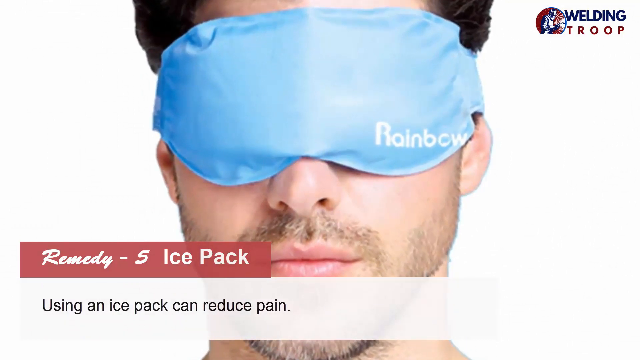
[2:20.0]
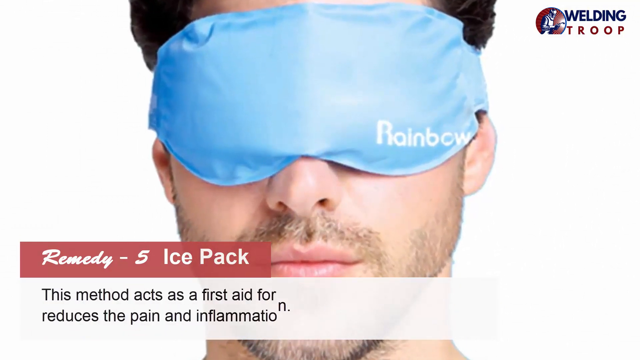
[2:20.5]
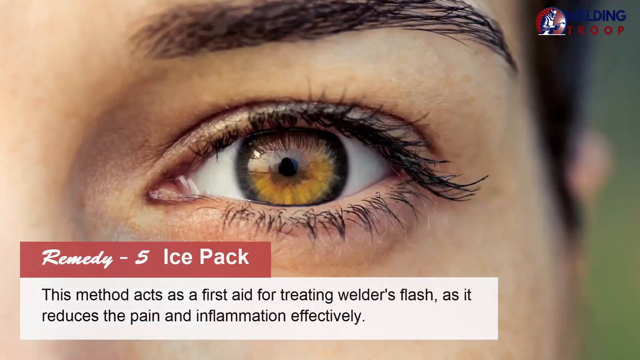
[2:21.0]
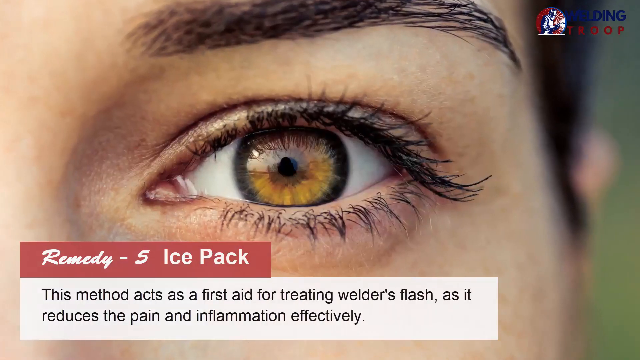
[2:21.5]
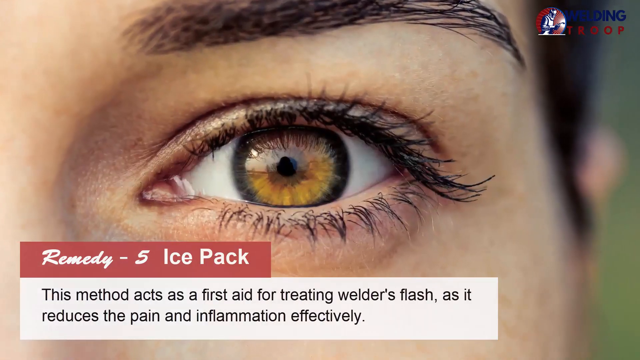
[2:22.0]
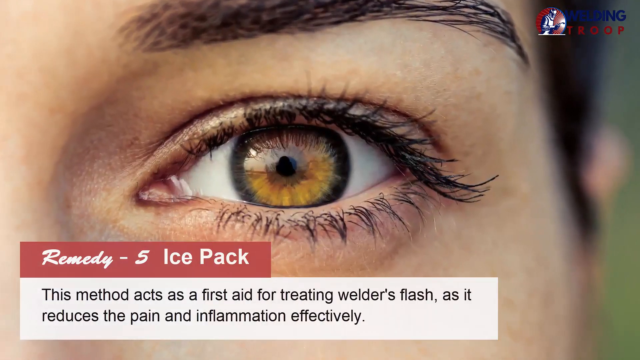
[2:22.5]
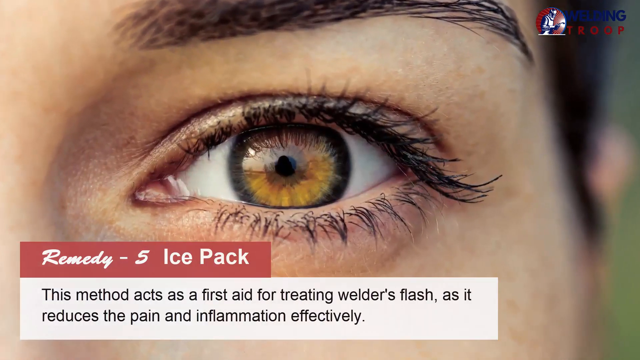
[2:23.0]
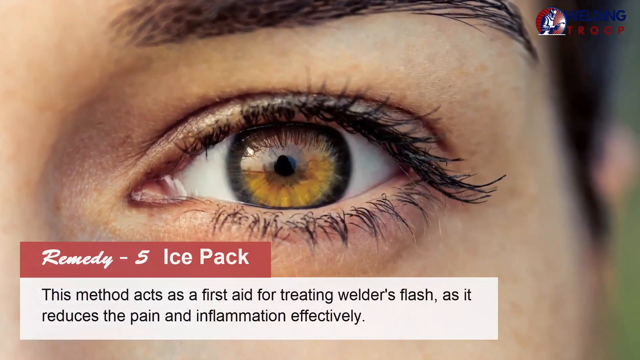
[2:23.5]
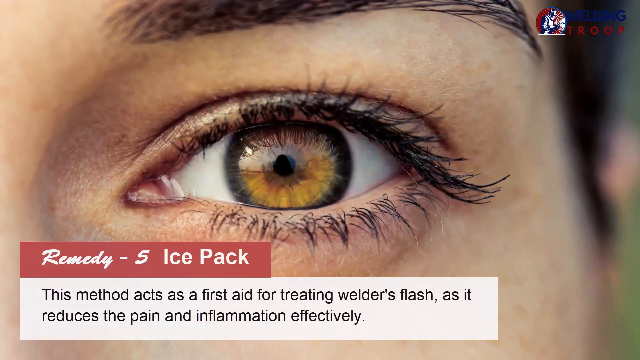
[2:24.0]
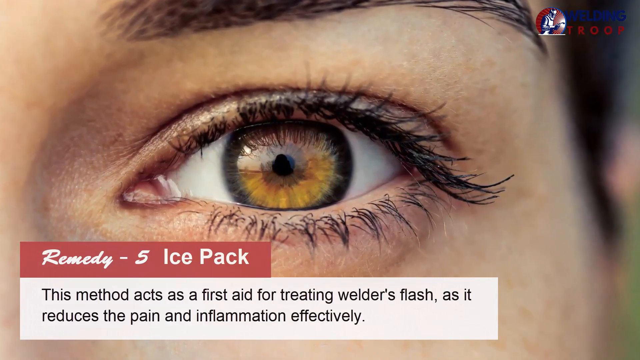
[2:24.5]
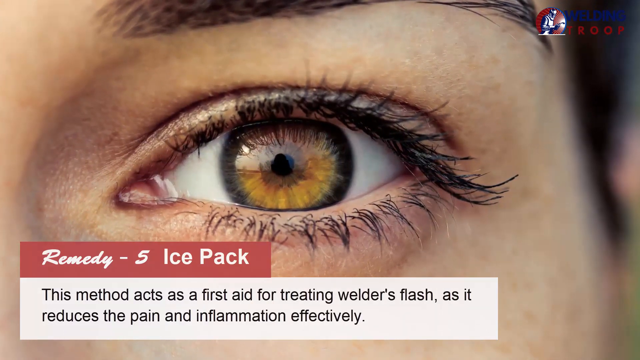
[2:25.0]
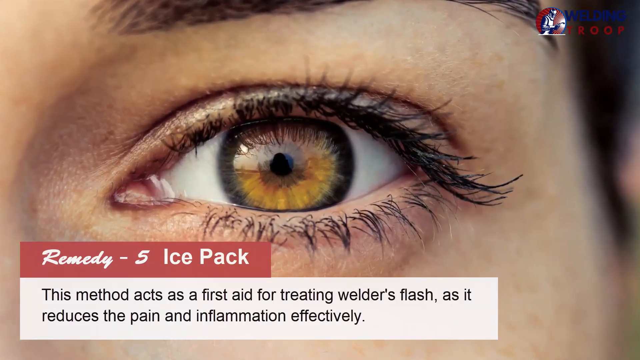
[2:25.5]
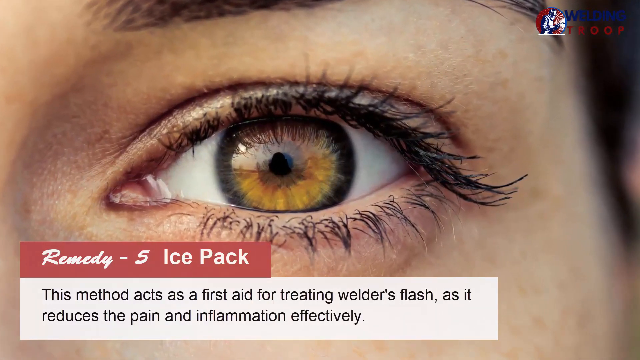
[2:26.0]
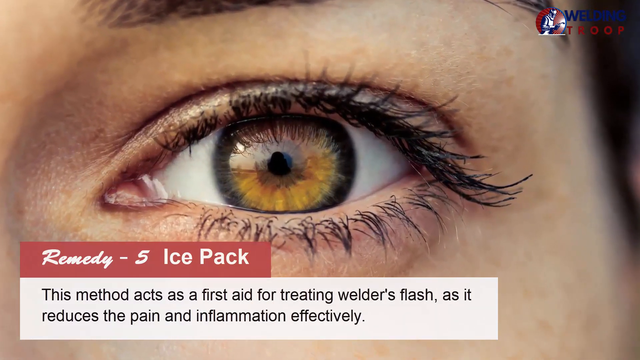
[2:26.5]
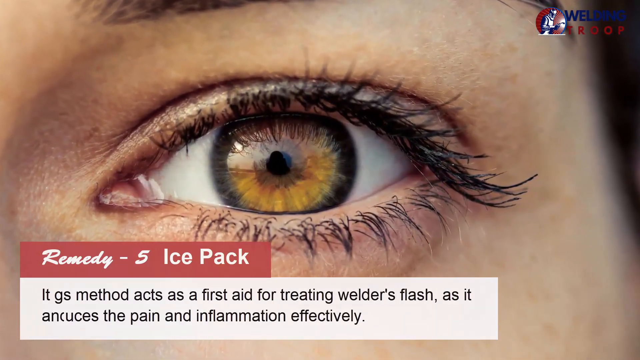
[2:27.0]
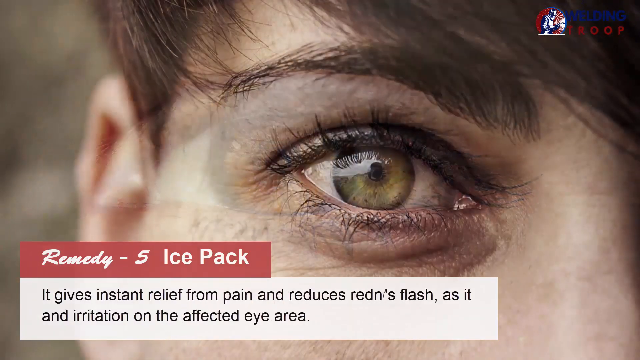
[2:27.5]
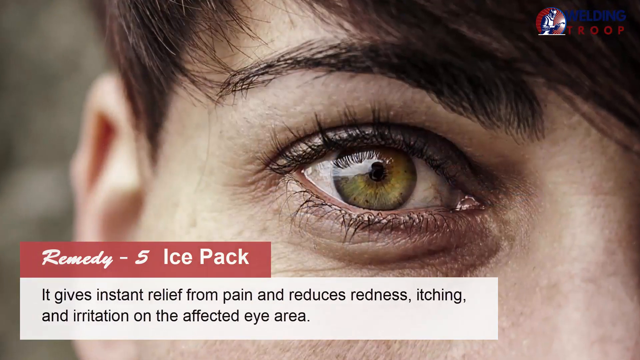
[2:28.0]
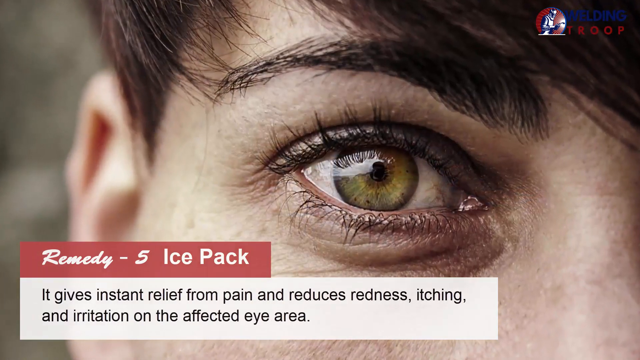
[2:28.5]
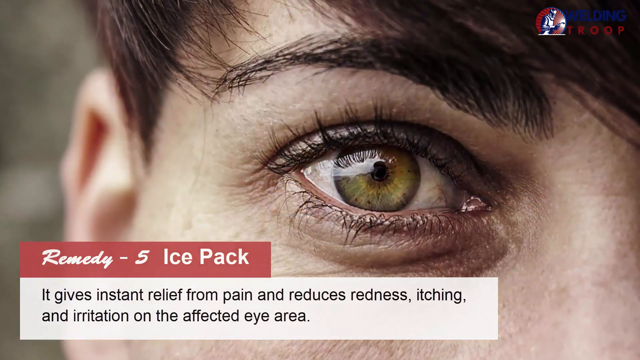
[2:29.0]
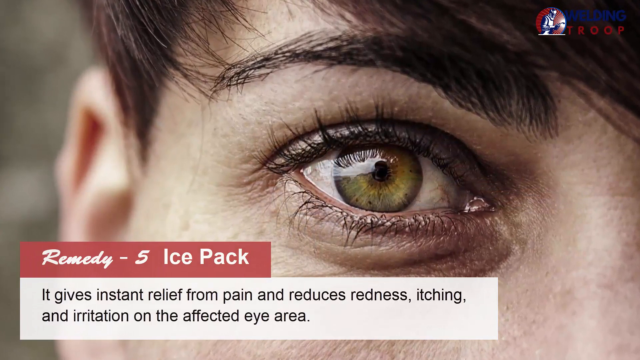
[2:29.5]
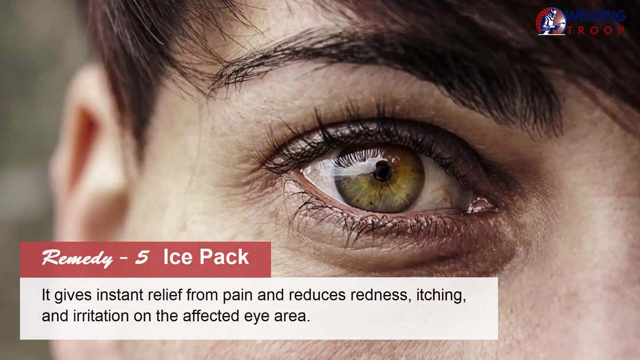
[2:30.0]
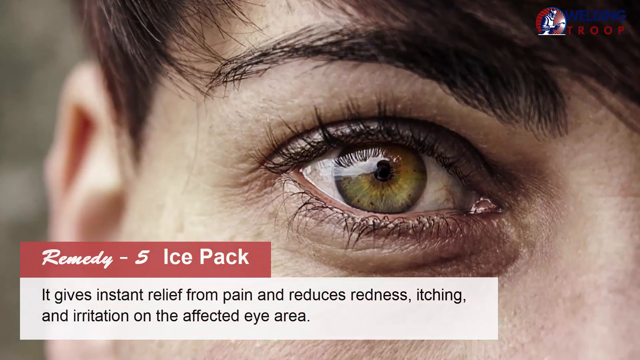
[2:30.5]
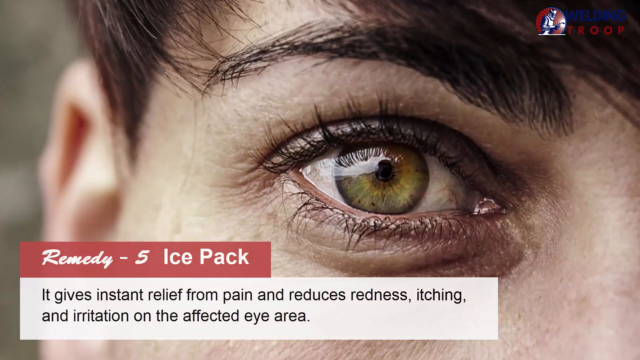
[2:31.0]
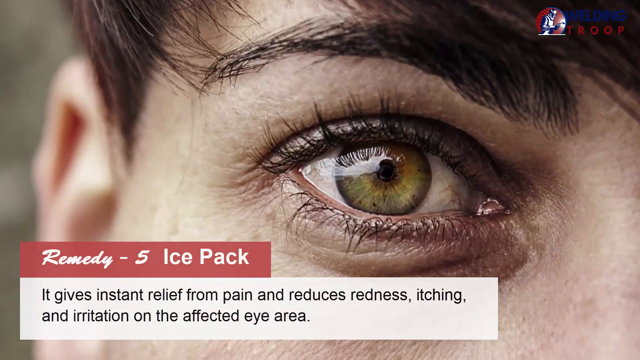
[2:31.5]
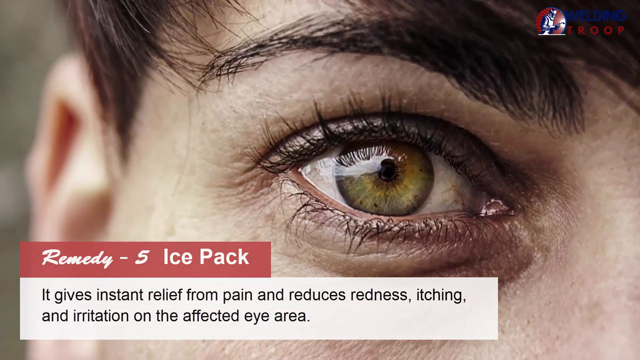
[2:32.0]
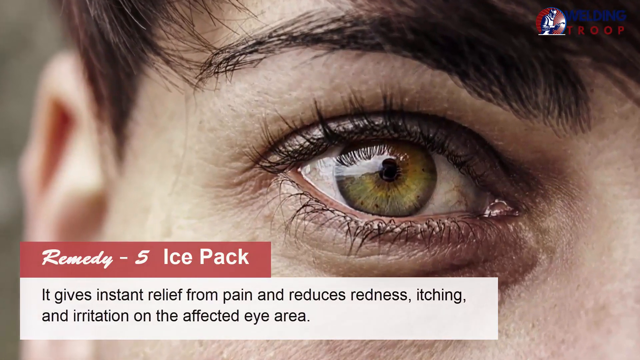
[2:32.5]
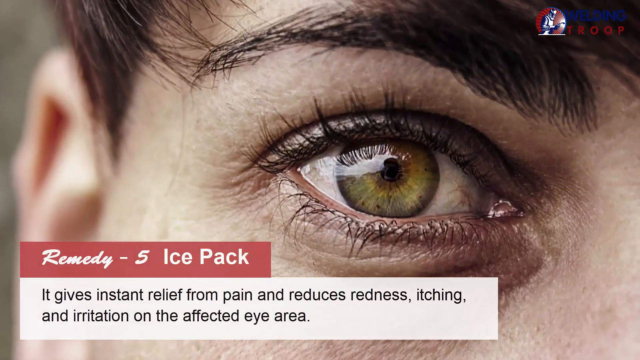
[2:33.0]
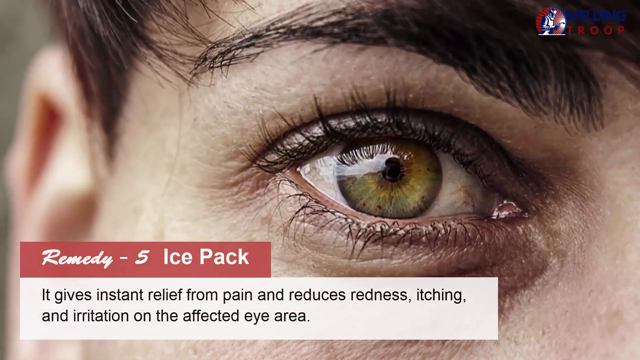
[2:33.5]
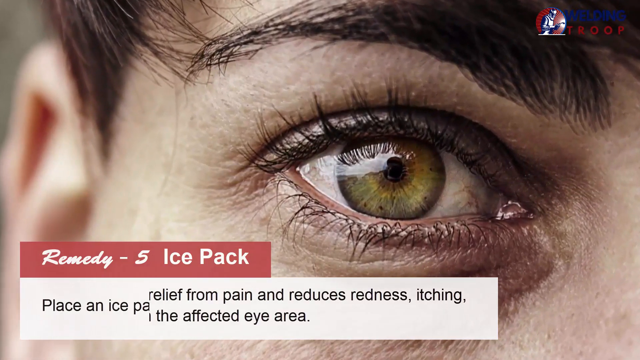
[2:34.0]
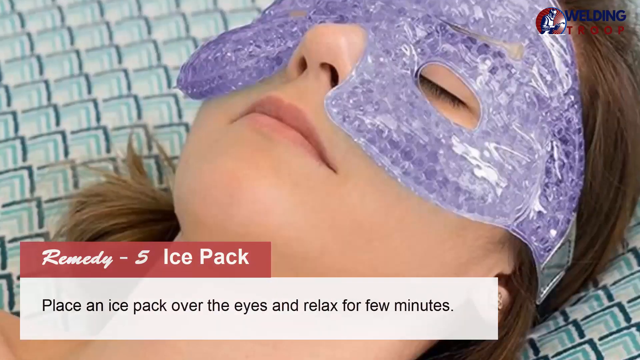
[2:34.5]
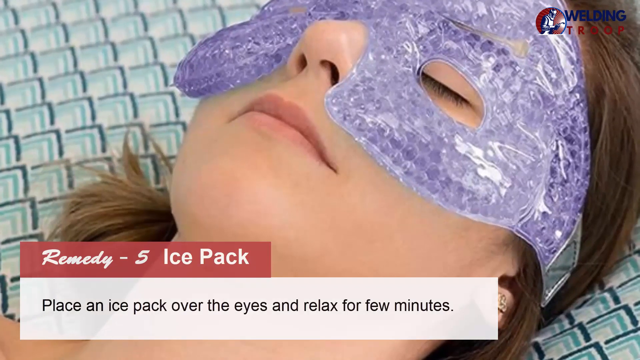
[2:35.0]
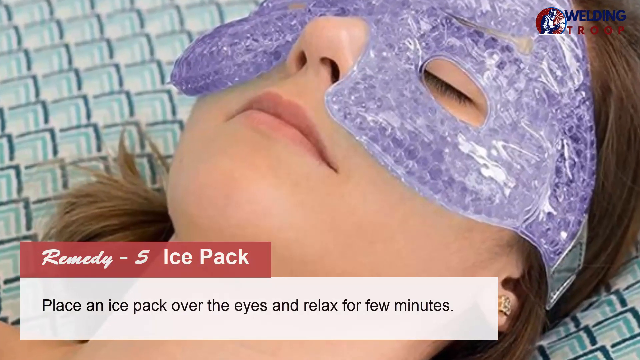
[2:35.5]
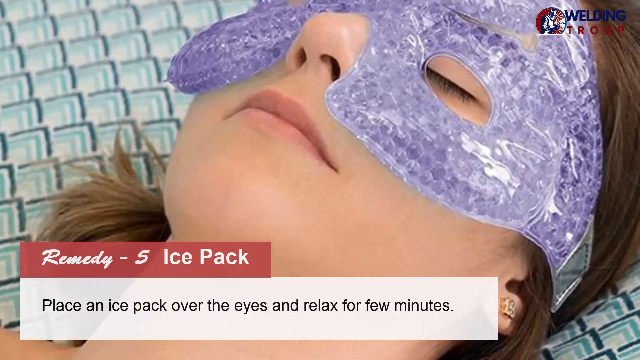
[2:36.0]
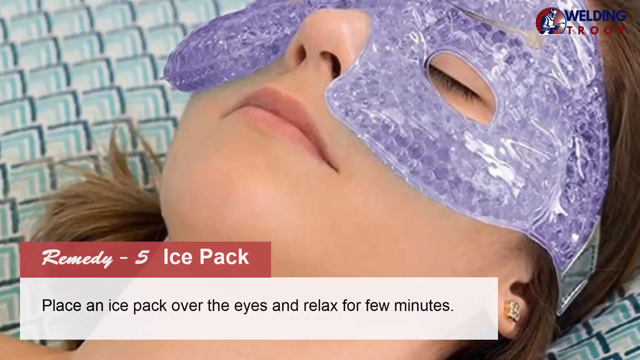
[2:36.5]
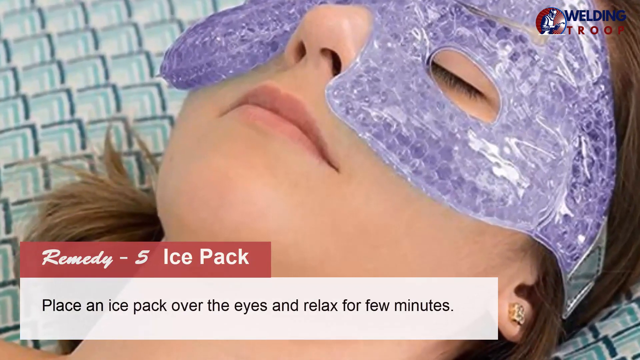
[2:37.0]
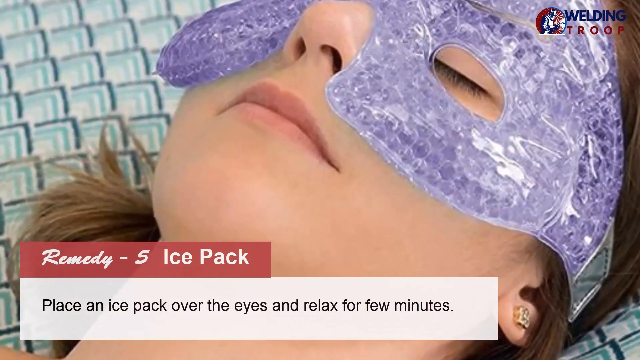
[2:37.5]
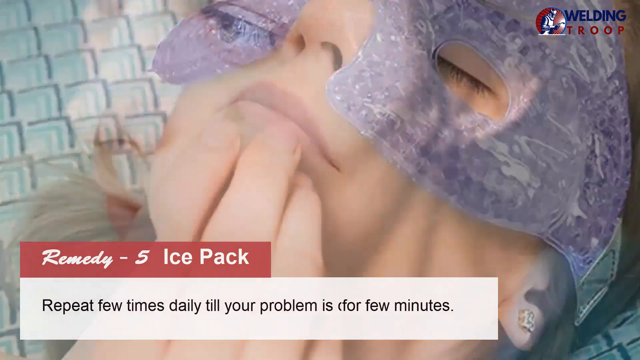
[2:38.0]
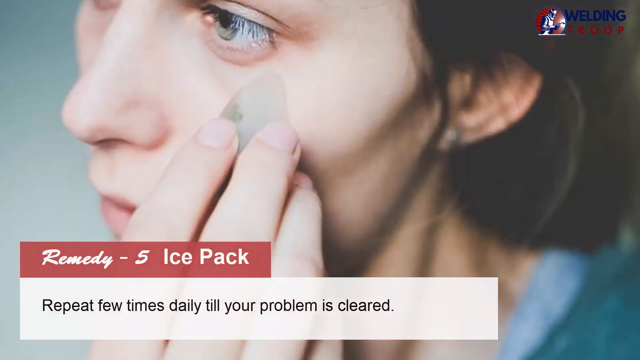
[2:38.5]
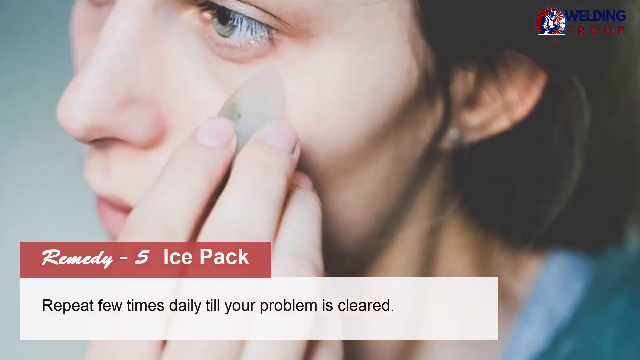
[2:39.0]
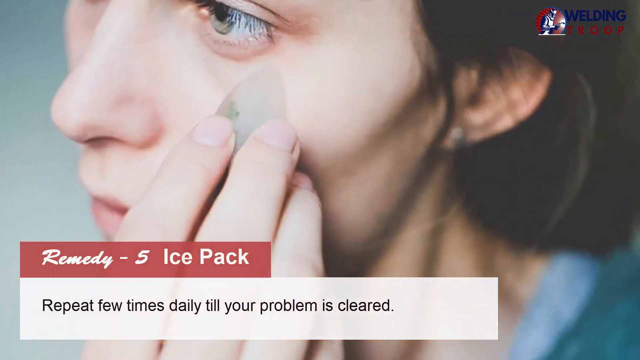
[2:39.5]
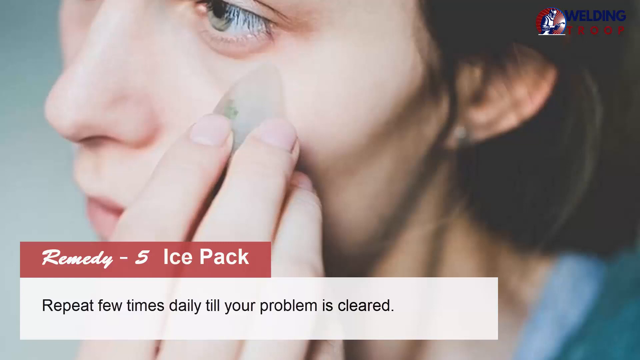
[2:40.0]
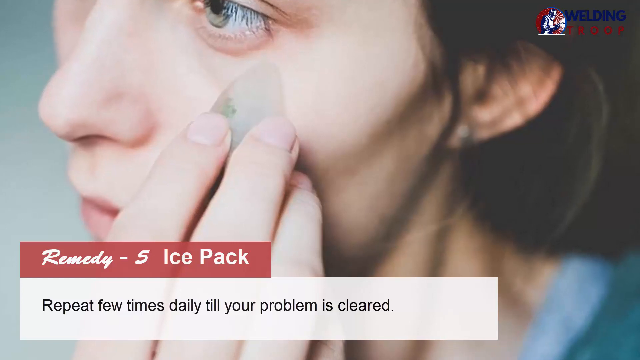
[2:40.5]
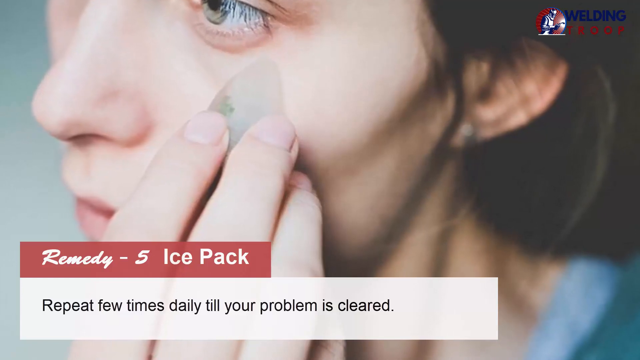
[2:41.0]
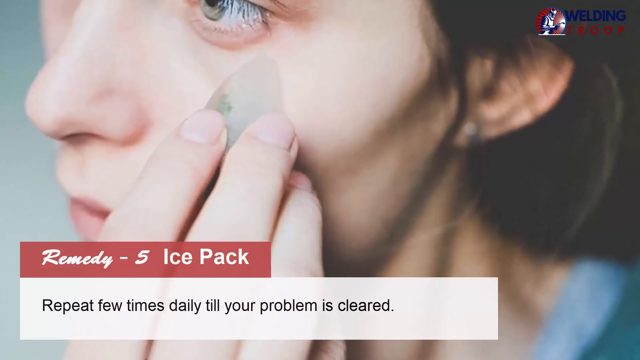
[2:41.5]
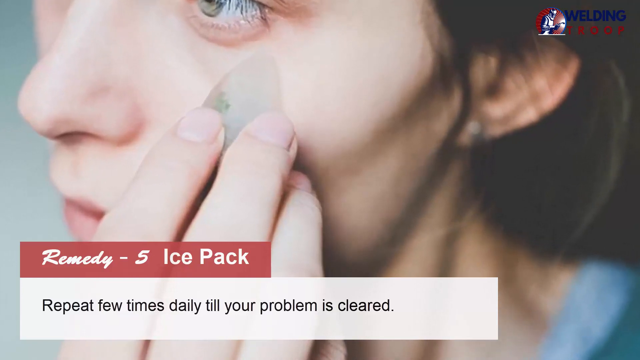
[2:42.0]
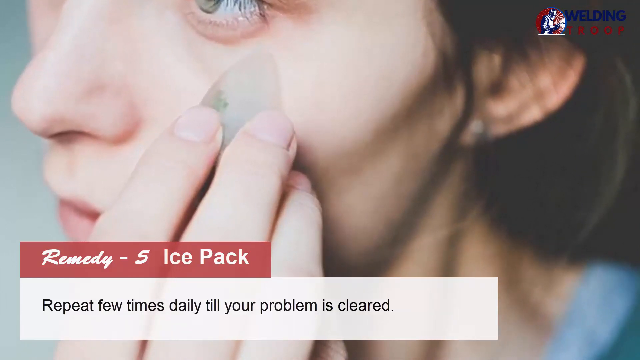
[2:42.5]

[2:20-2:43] A man wears a blue eye mask, with the text "Using an ice pack can reduce pain." A picture of a woman's eye carries the text "this method acts as a first aid for treating welder's flash is it reduces the pain and inflammation effectively." A close-up of another woman's eye follows, with "it gets instant relief from pain and reduces redness itching and irritation on the affected area." A woman wears a mask with holes at the eyes, and text instructs placing it over the eyes and relaxing for a few minutes. Finally, a woman places a piece of ice under her eye, with the text "repeat few times daily until your problem is clear."